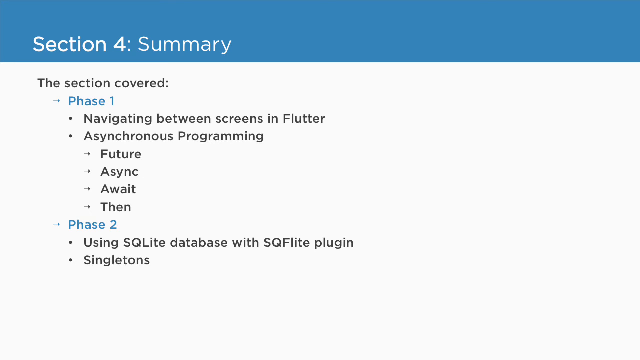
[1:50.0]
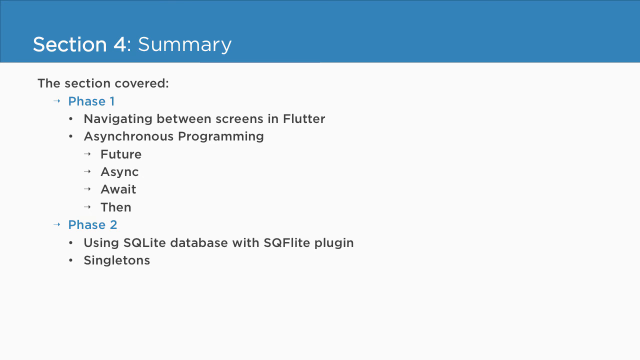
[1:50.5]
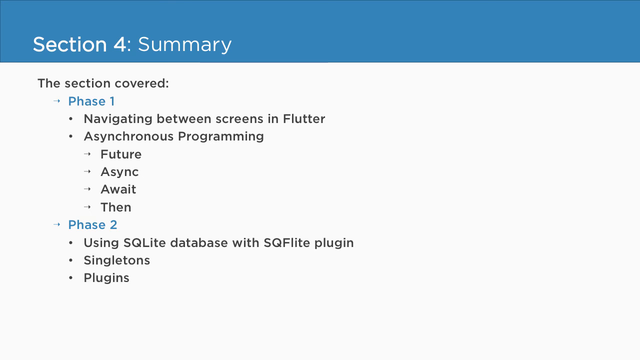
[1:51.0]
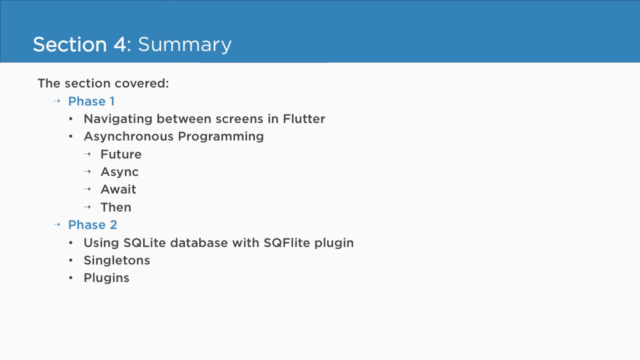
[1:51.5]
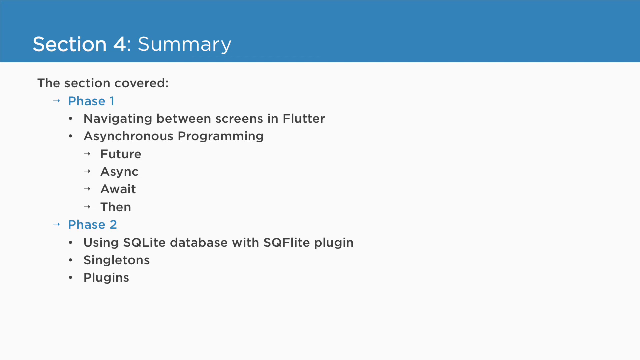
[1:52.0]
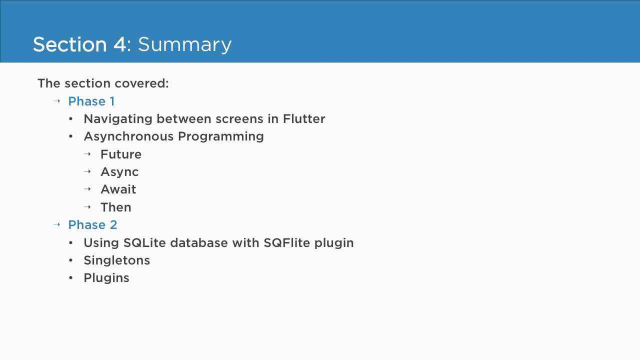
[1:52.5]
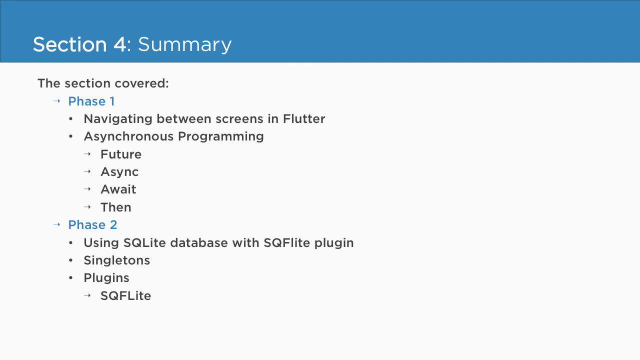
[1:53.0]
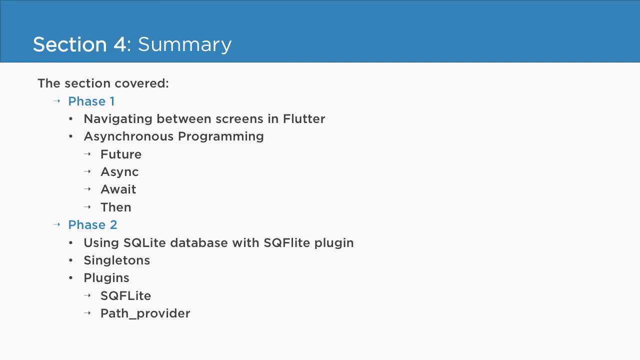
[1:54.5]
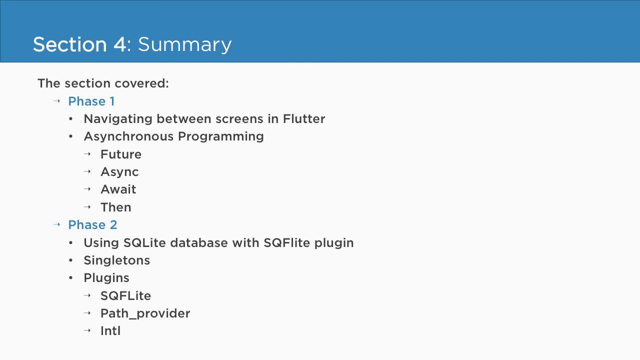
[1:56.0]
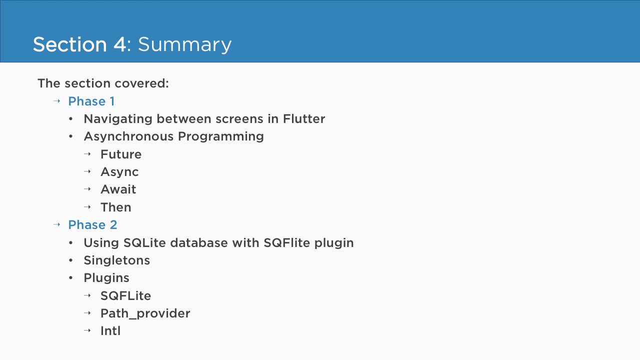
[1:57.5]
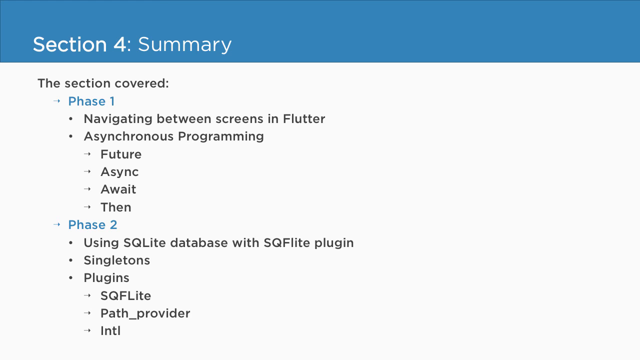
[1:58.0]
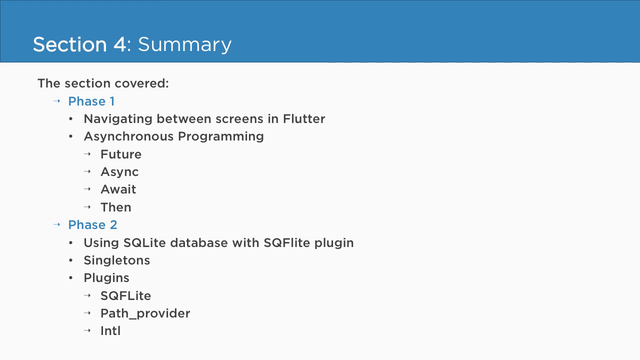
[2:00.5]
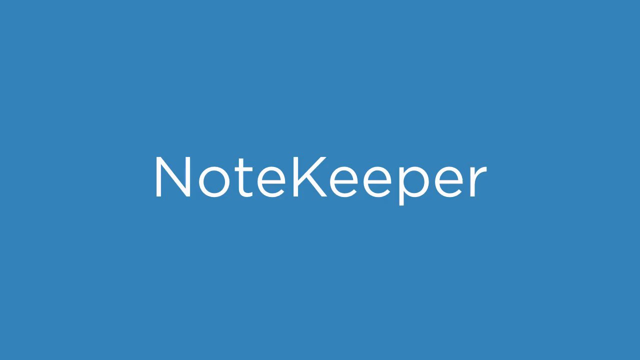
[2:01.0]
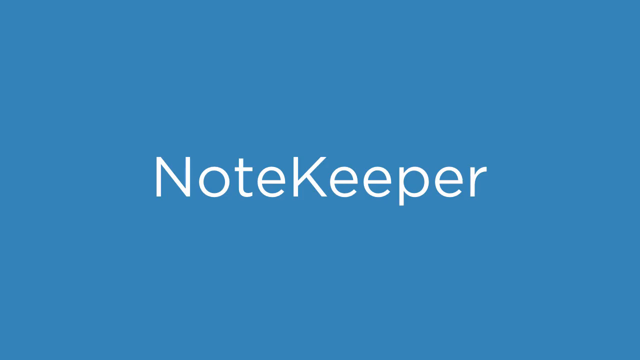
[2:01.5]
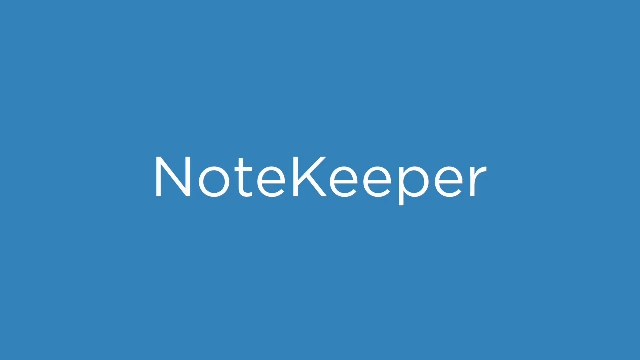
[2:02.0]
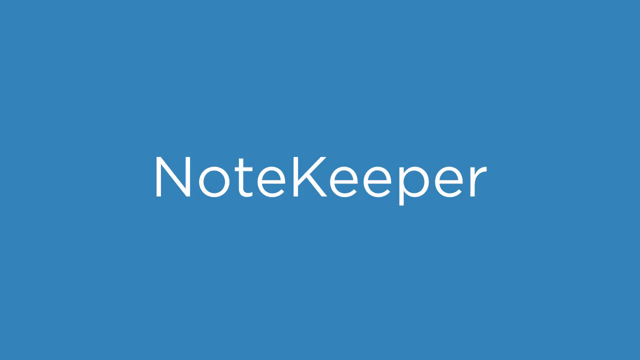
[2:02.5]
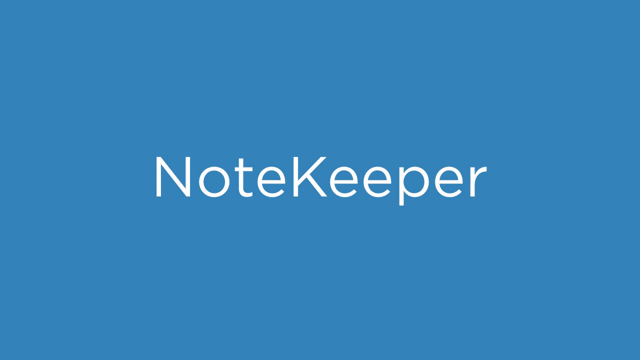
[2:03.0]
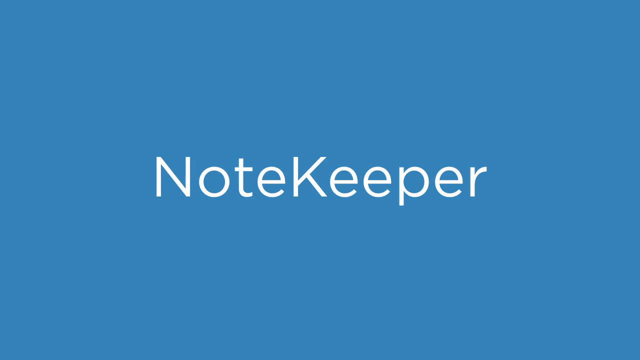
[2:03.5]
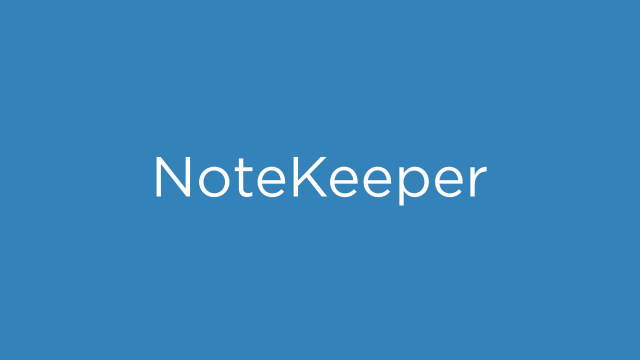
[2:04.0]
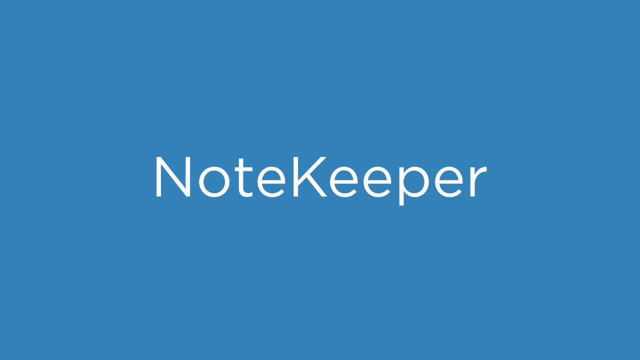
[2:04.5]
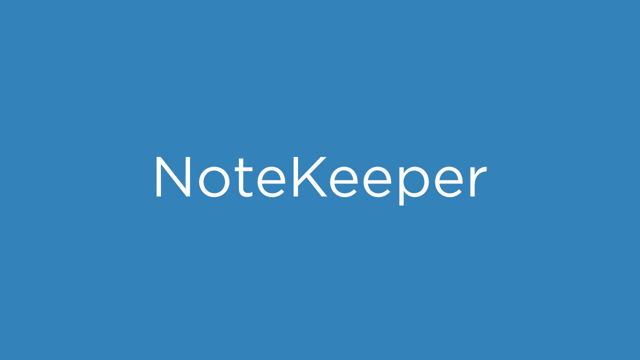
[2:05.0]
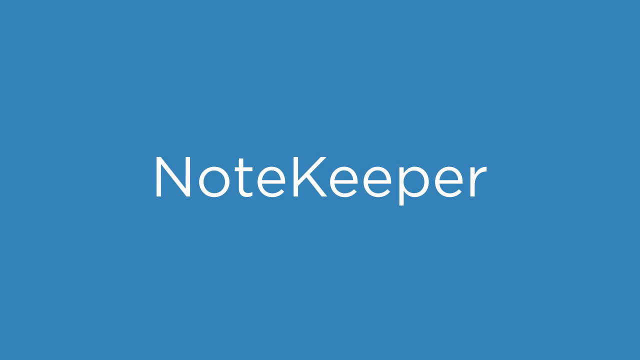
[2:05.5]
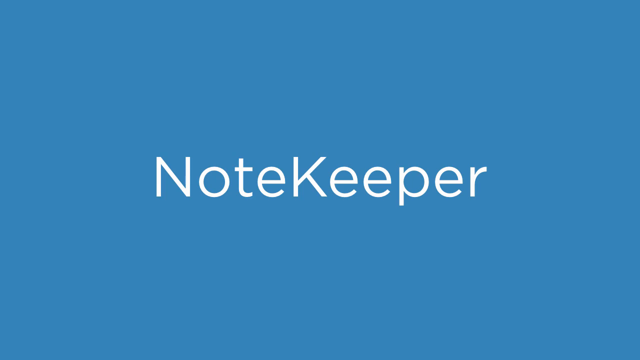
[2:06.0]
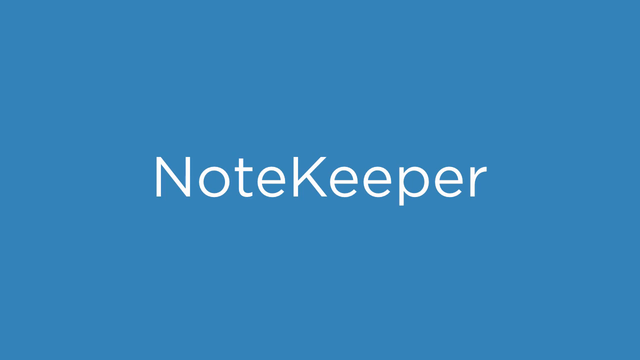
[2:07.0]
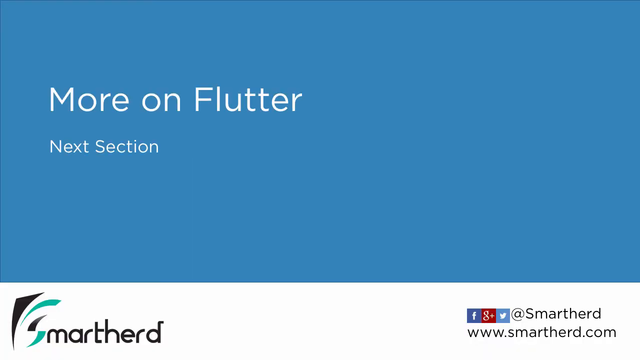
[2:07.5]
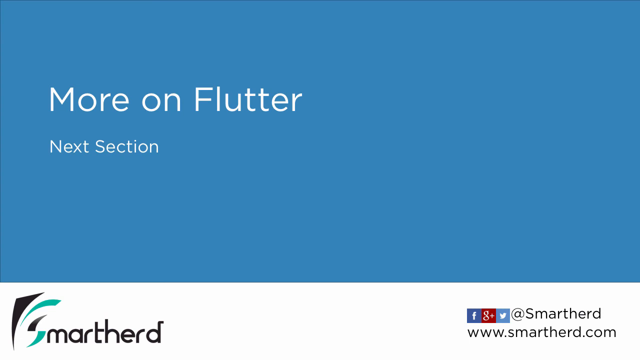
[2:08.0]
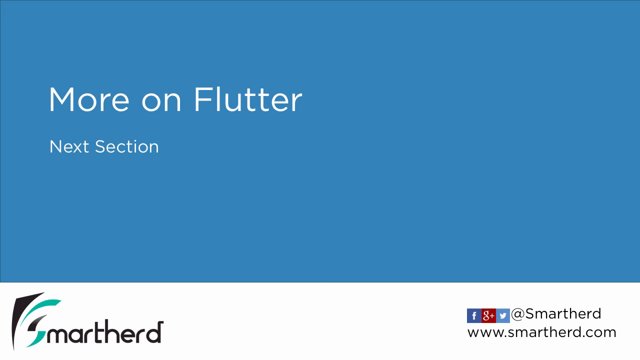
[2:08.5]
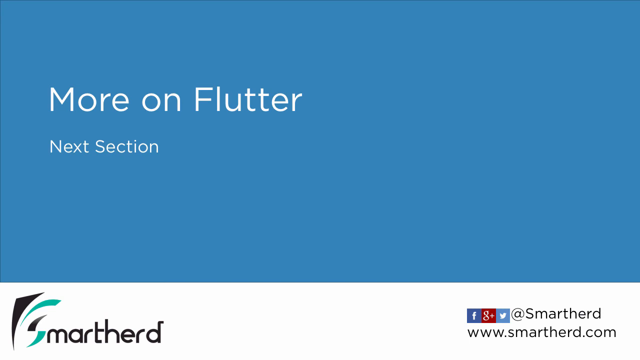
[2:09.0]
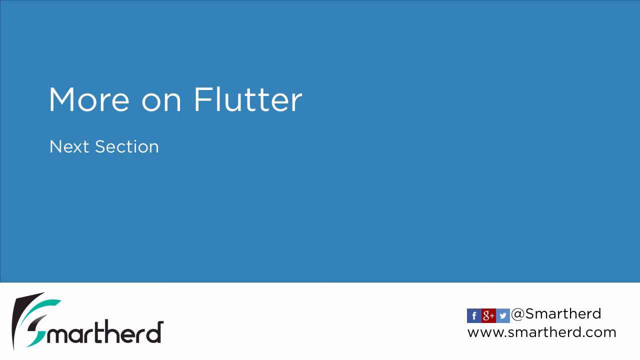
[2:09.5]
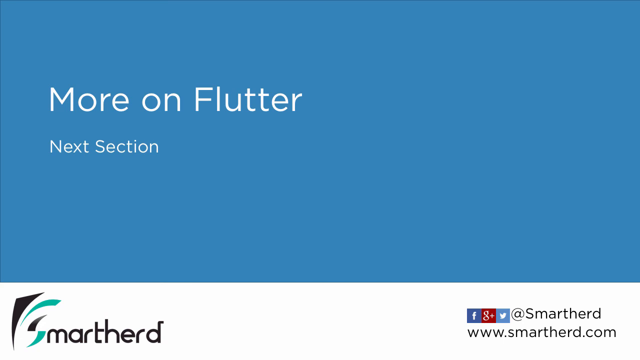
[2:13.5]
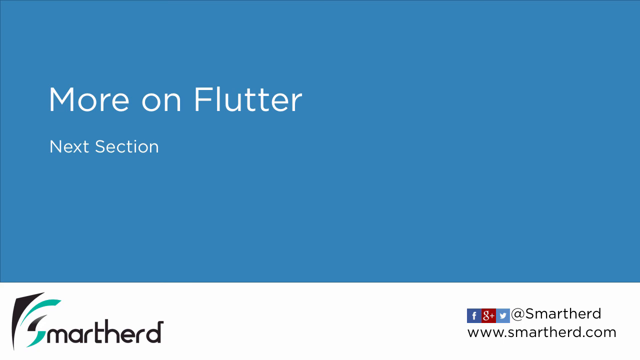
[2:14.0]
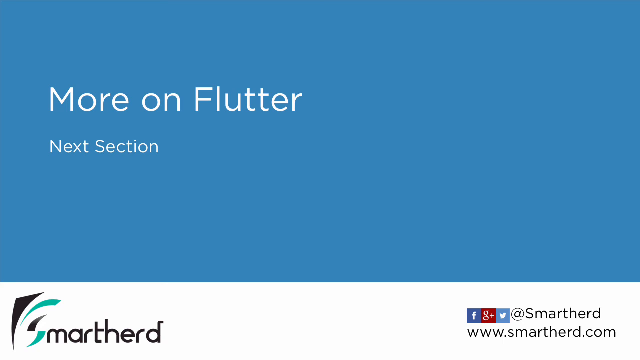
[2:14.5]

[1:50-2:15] The video continues with phase two, covering database and plugins, and finishes with the NoteKeeper screen, the app. The next topic apparently mentioned is Flutter.